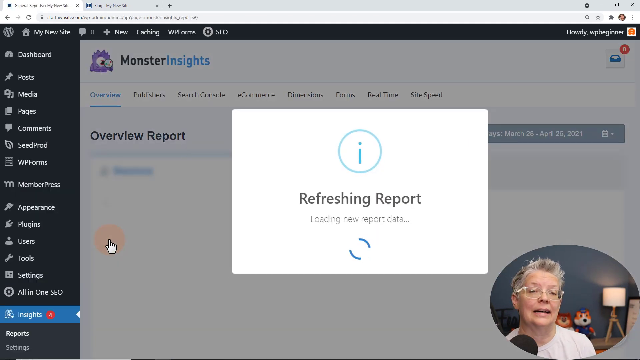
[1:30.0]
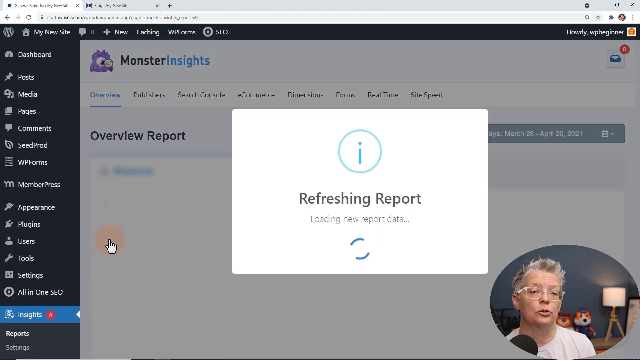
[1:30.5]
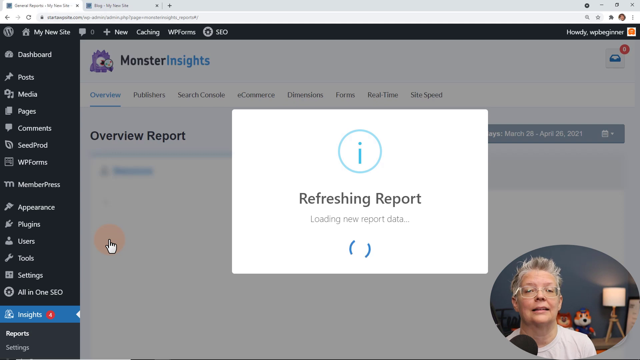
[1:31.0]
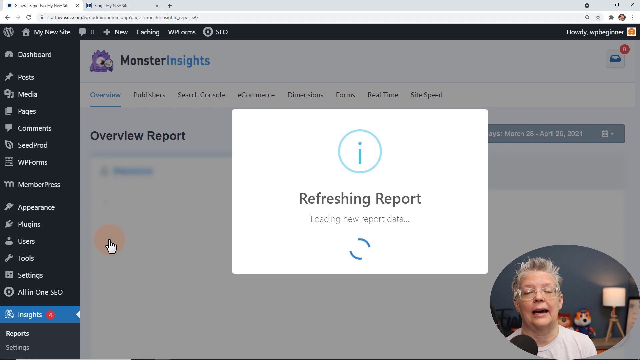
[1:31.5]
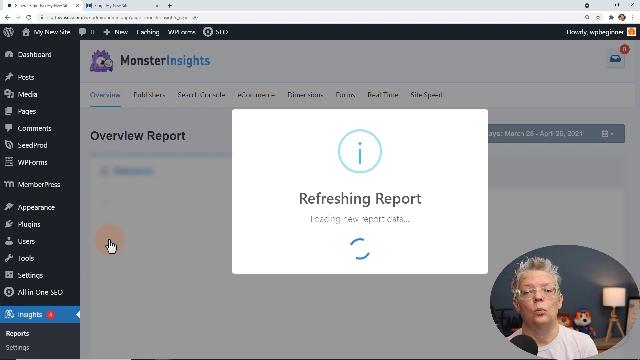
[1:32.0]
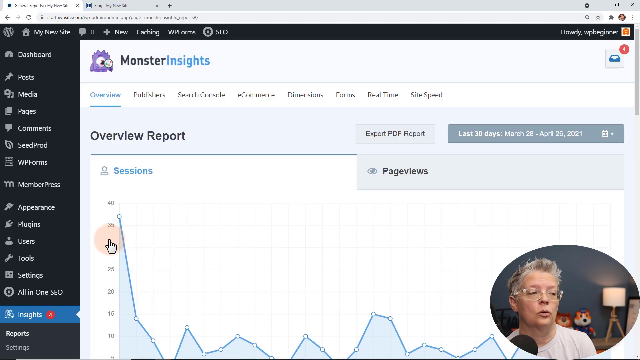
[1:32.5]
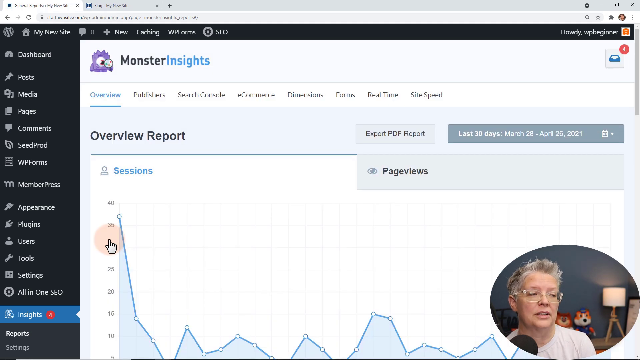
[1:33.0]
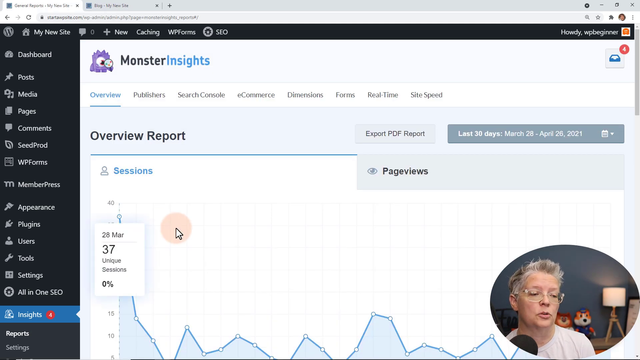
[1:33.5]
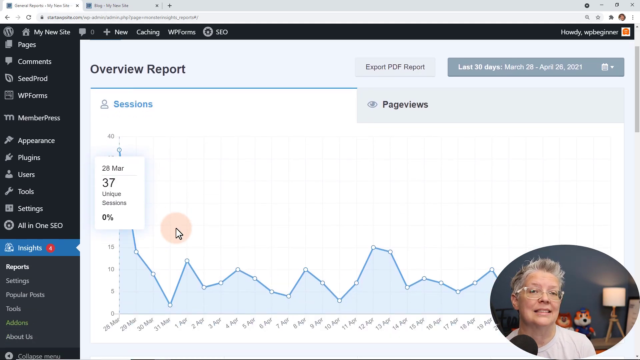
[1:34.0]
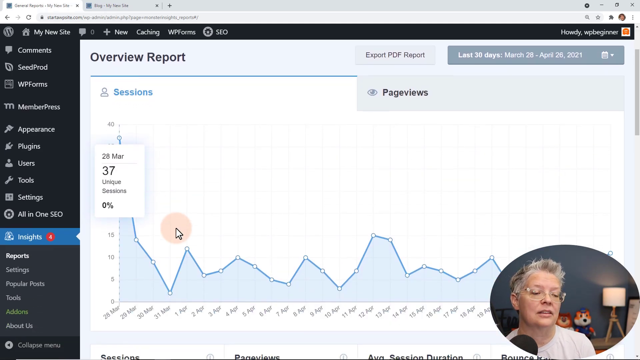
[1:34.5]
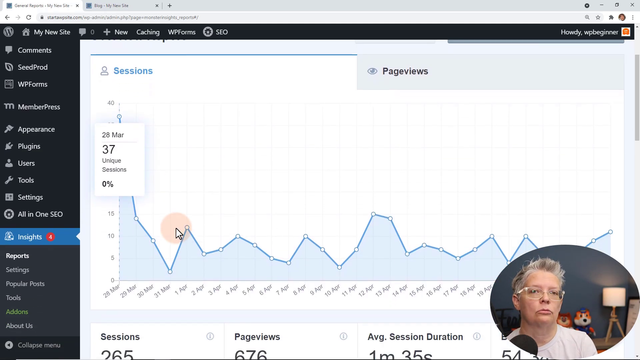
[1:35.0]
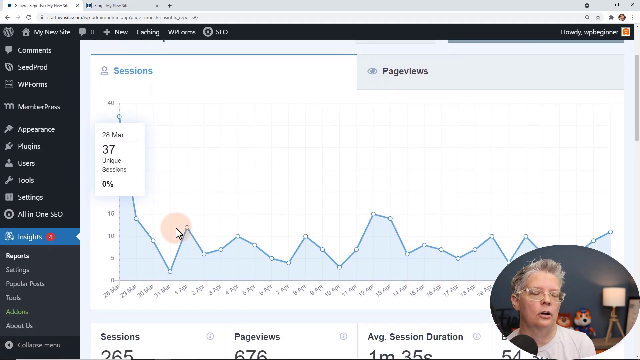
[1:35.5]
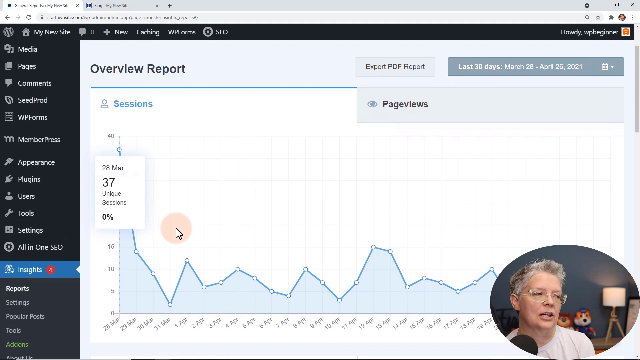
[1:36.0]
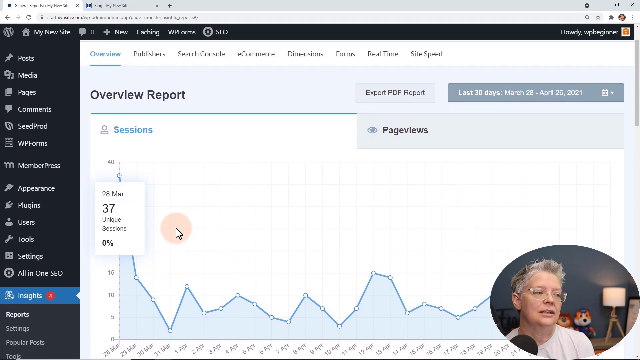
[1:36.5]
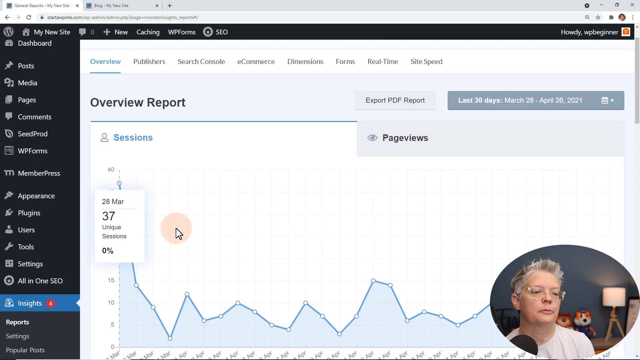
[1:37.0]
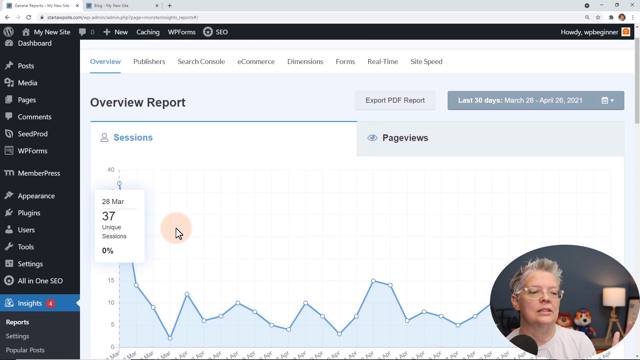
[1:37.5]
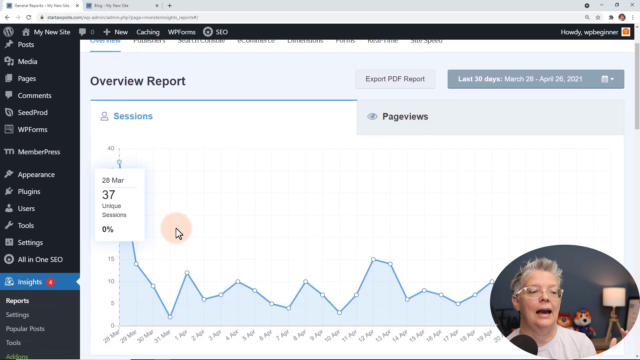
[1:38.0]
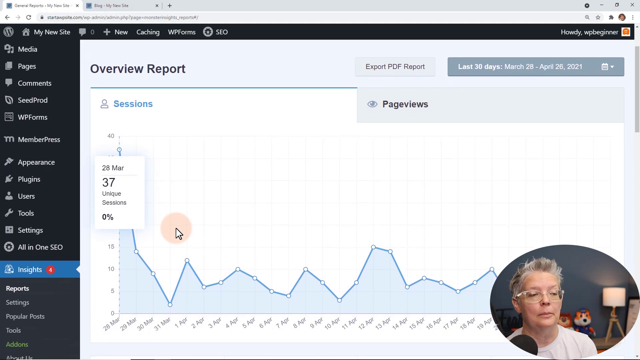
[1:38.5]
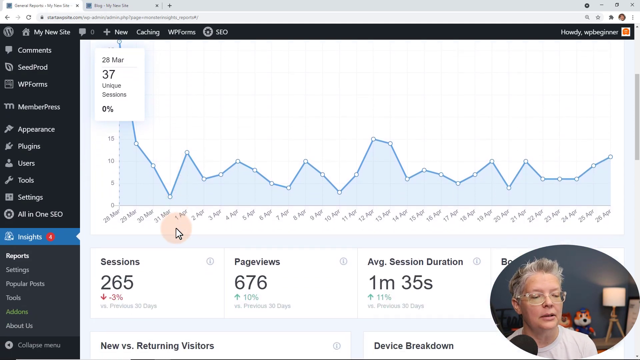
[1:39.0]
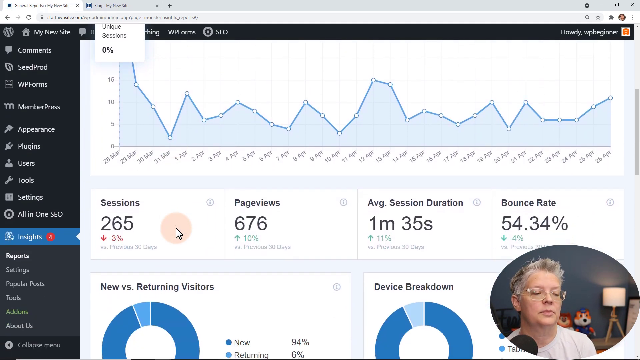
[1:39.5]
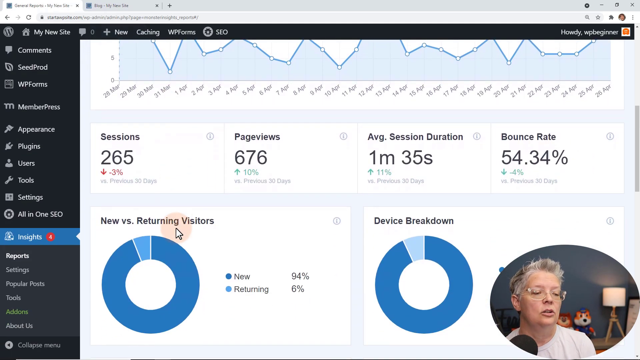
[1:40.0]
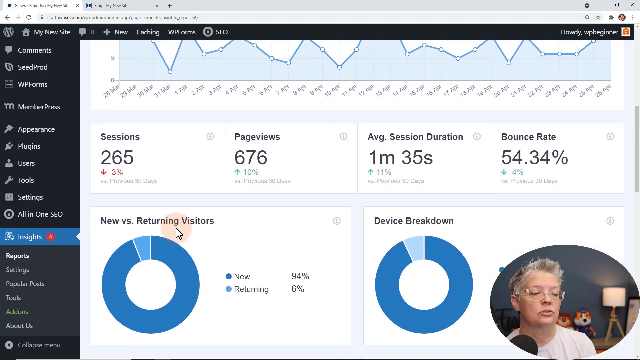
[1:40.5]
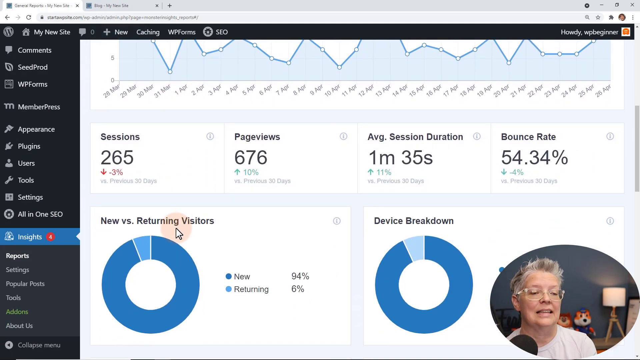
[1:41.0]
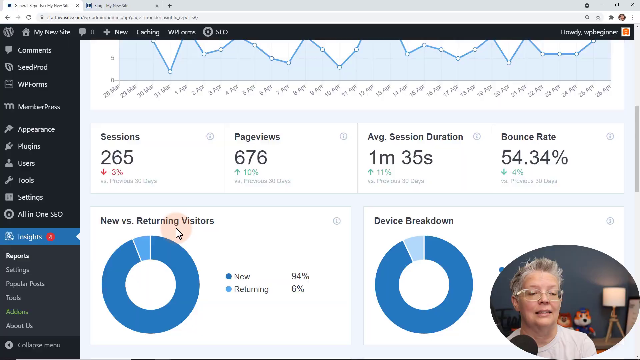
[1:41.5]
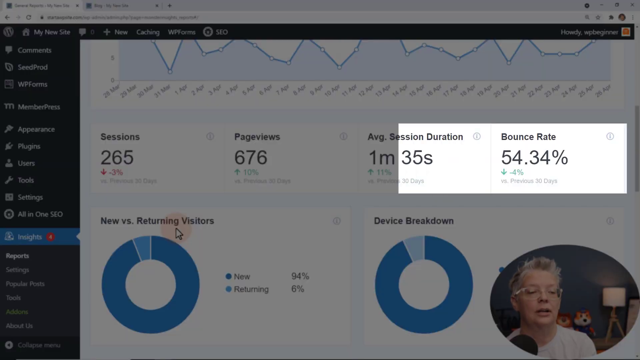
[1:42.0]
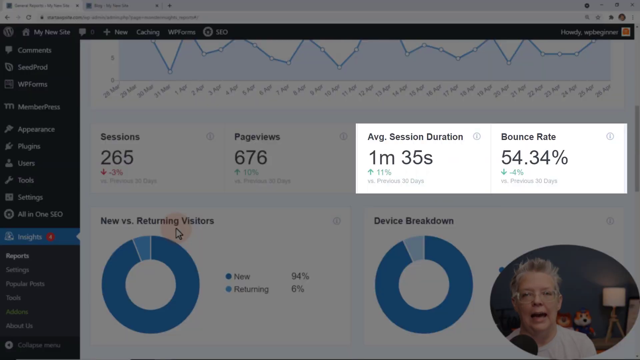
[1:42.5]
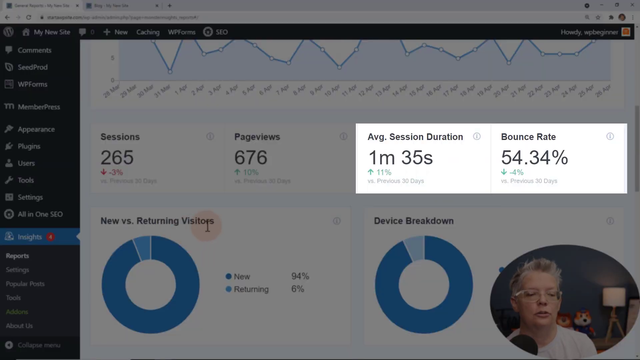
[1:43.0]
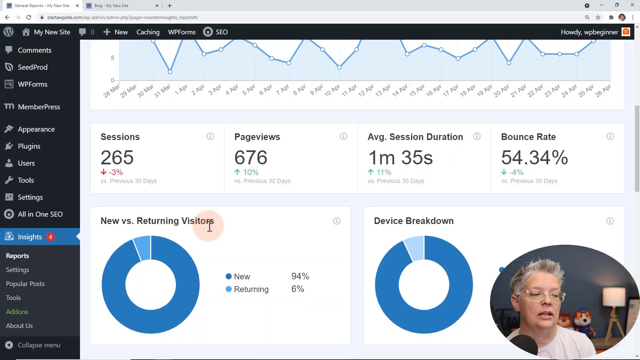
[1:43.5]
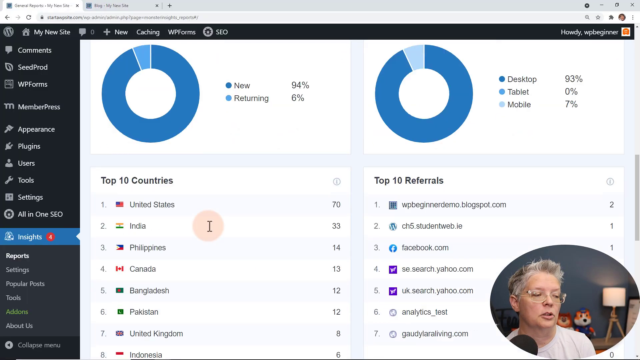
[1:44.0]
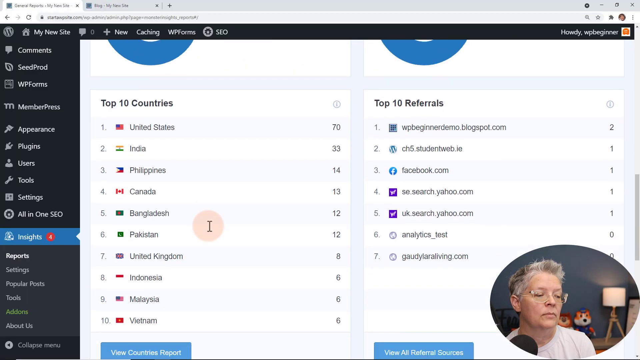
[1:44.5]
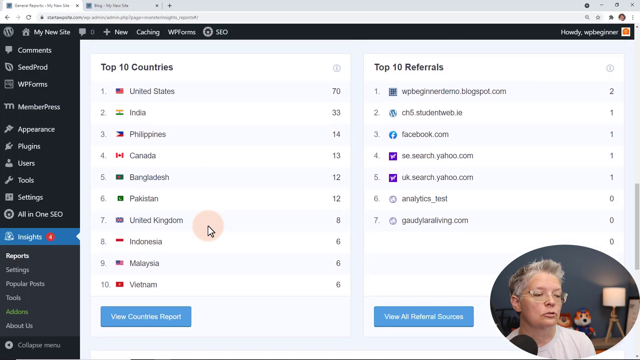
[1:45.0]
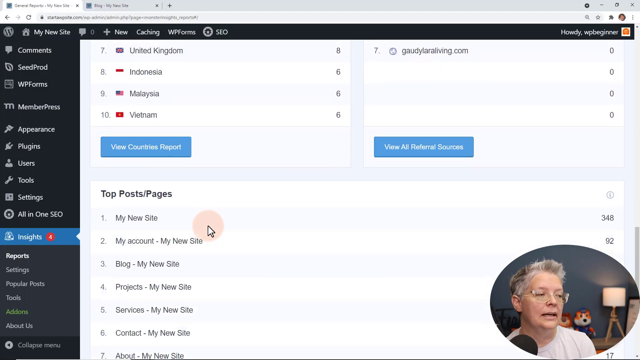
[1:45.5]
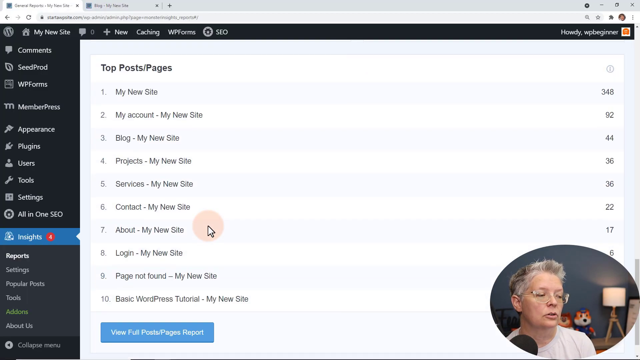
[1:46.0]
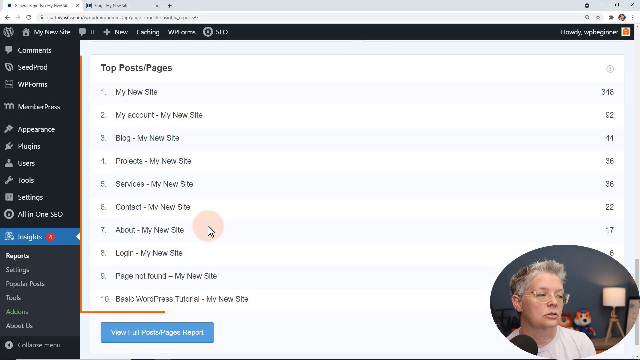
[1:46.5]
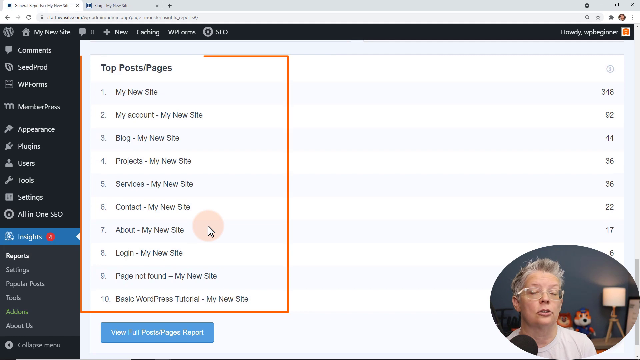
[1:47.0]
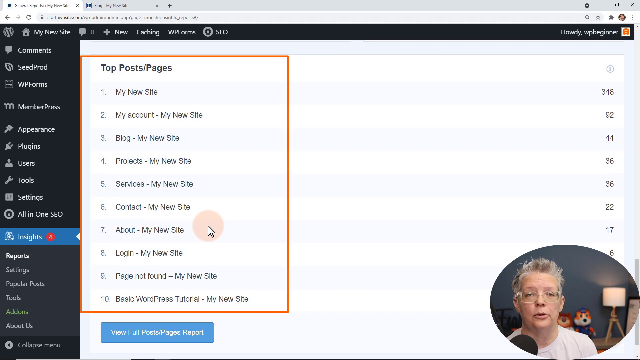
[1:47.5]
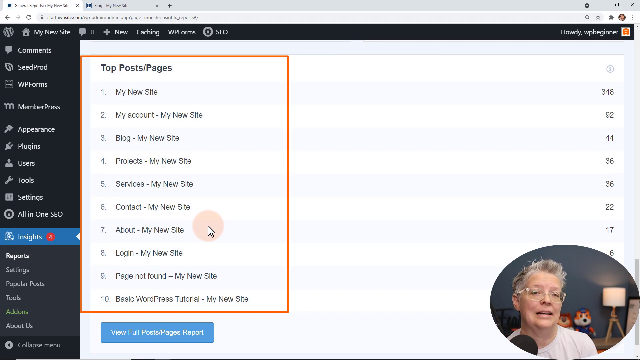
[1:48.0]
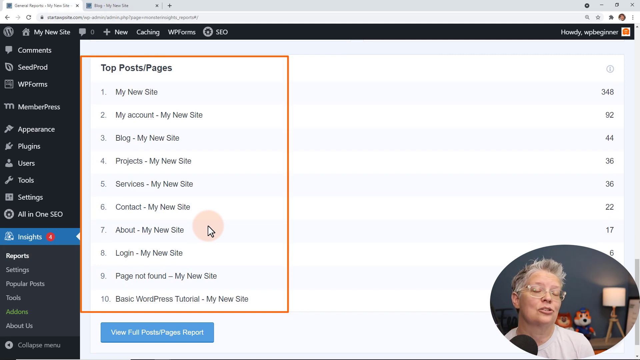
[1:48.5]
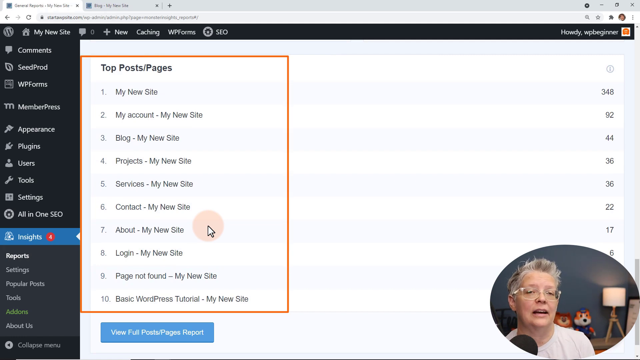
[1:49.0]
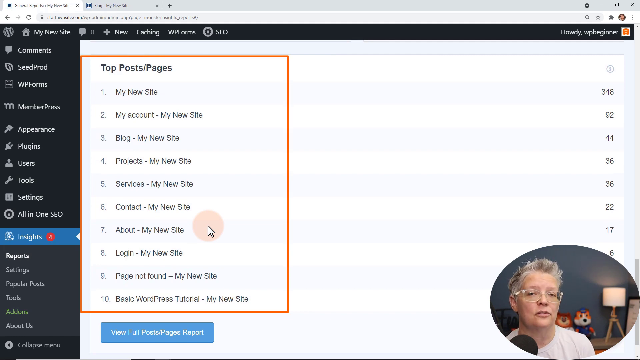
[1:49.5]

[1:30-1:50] On the reports page, the woman with glasses is still visible with her microphone and background. A report refreshes, loading new report data, and an actual report appears with a kind of graph, including an overview report. There is other information such as "20 March." She then scrolls down, revealing more information under top posts/page, with top countries and top referrals above it, as she shows off a specific feature.